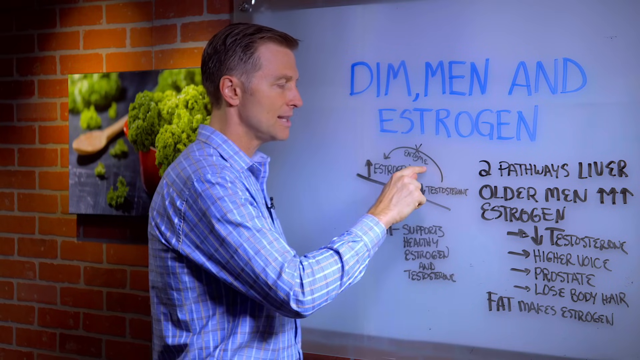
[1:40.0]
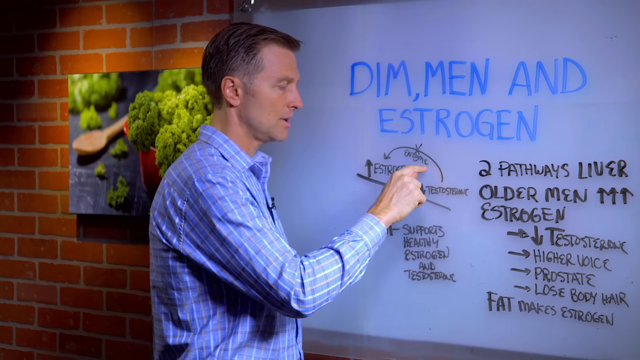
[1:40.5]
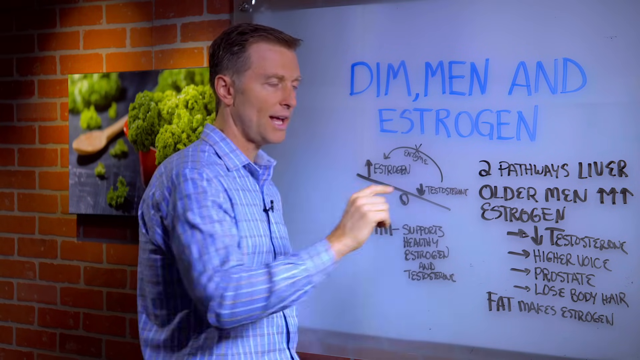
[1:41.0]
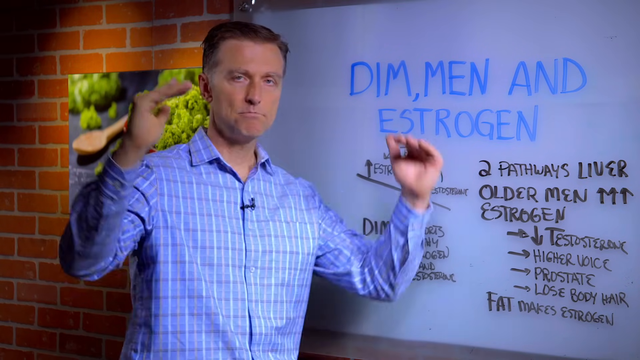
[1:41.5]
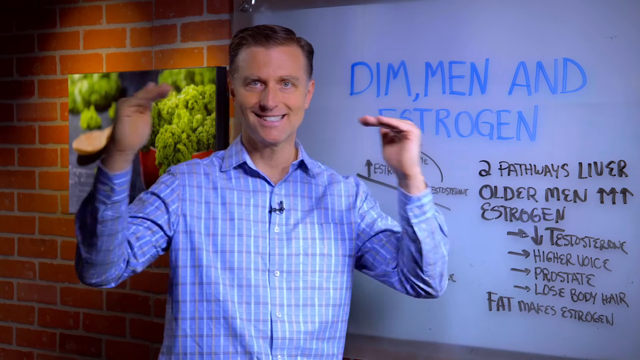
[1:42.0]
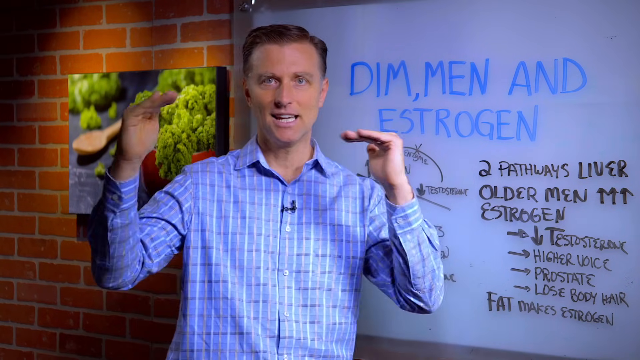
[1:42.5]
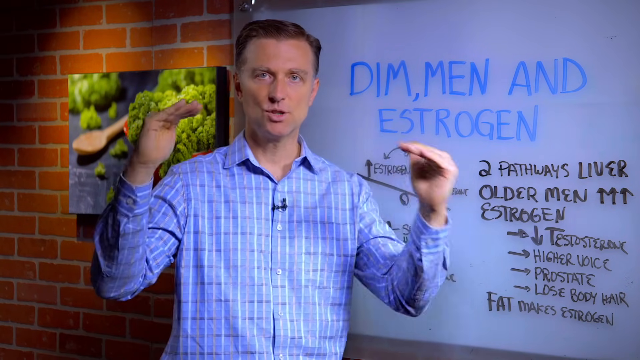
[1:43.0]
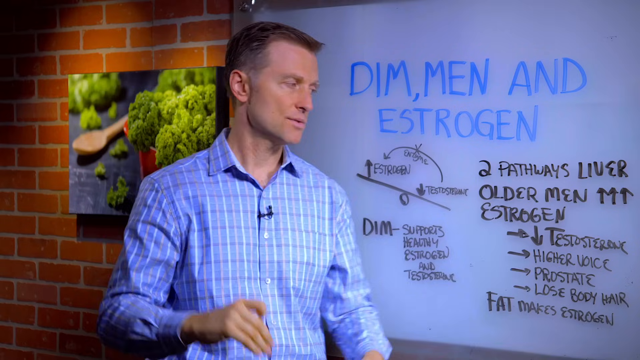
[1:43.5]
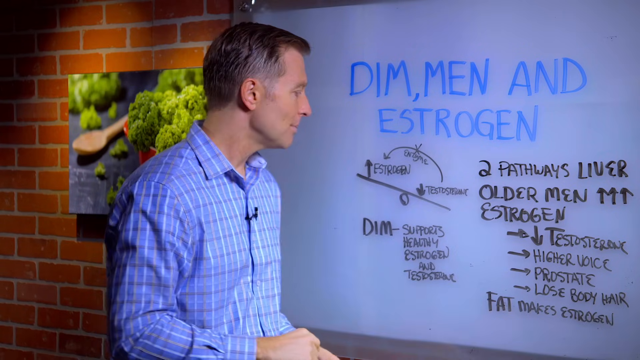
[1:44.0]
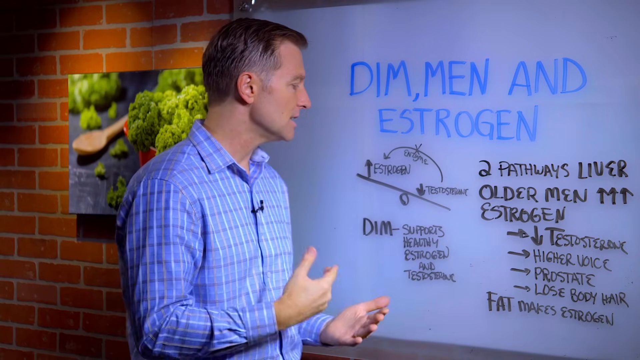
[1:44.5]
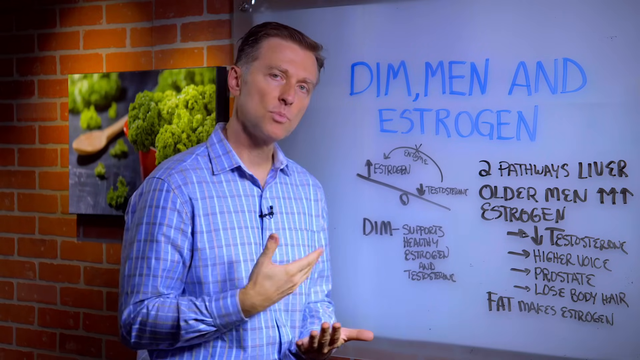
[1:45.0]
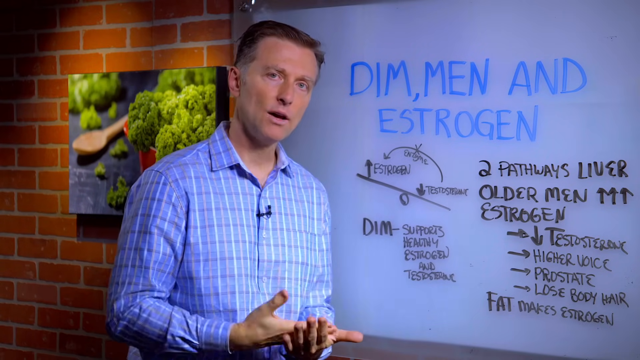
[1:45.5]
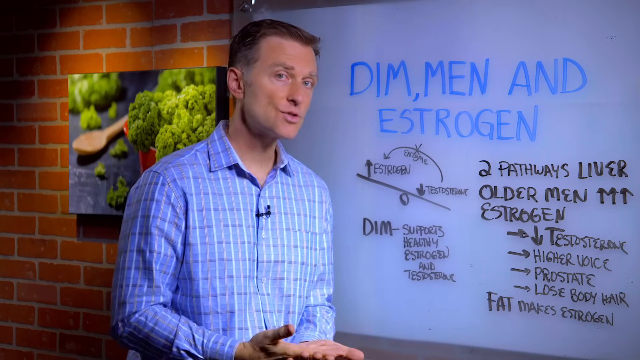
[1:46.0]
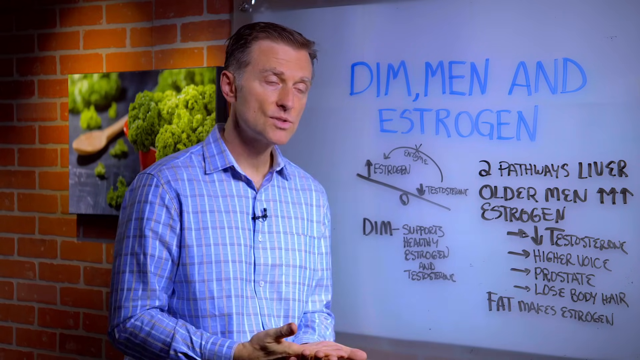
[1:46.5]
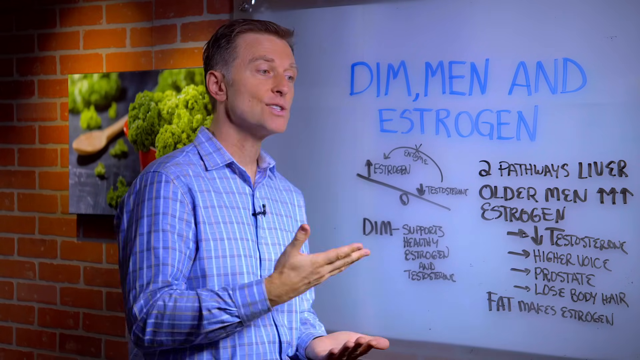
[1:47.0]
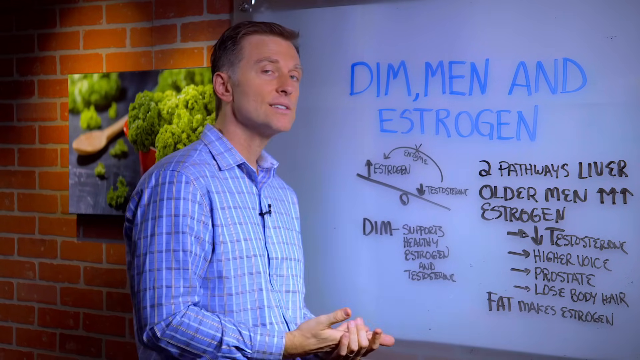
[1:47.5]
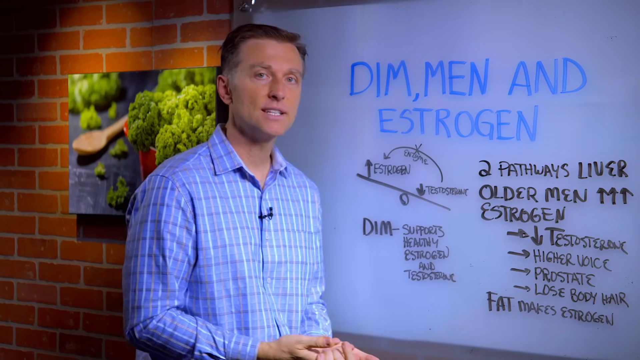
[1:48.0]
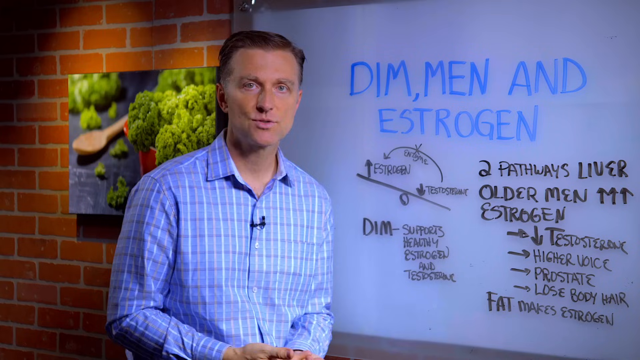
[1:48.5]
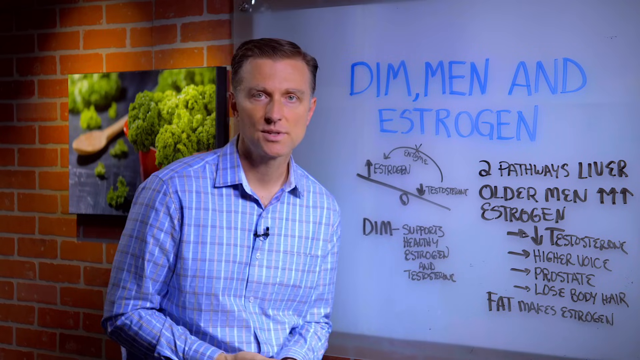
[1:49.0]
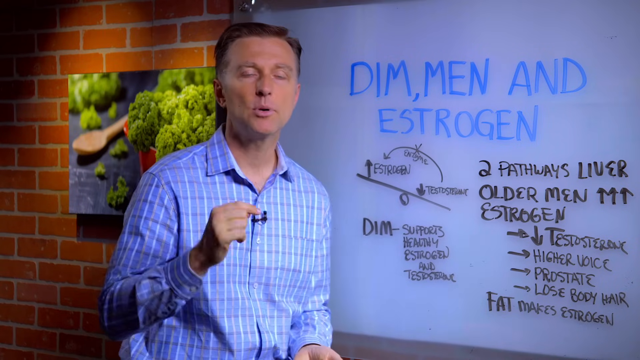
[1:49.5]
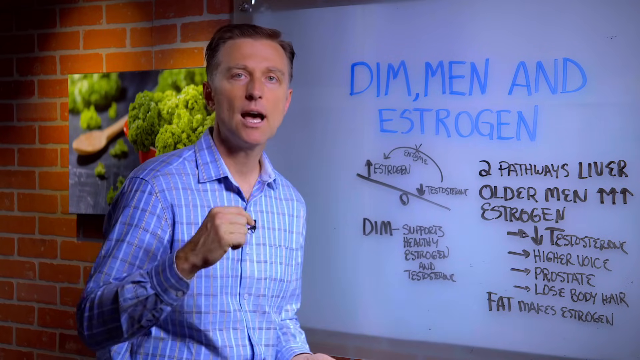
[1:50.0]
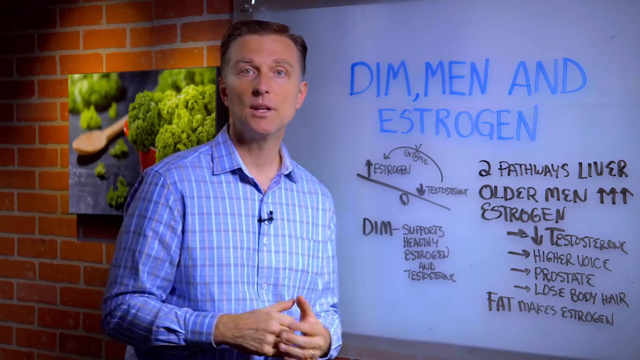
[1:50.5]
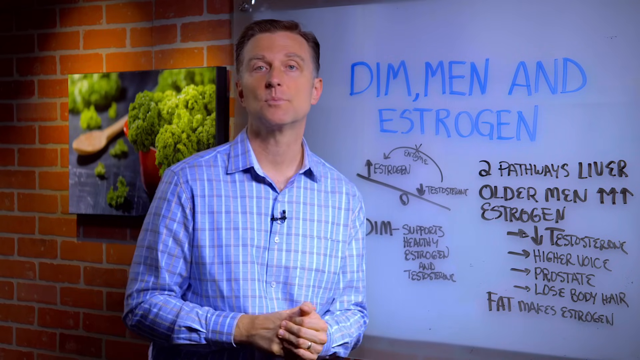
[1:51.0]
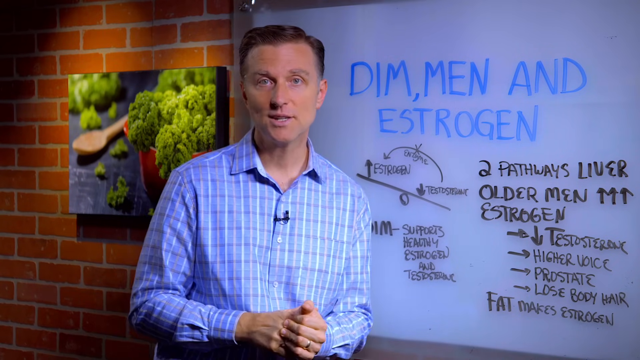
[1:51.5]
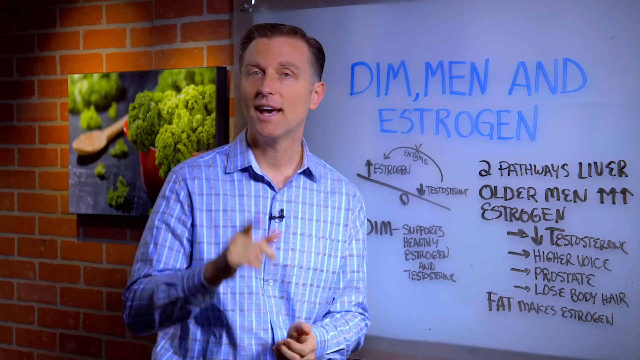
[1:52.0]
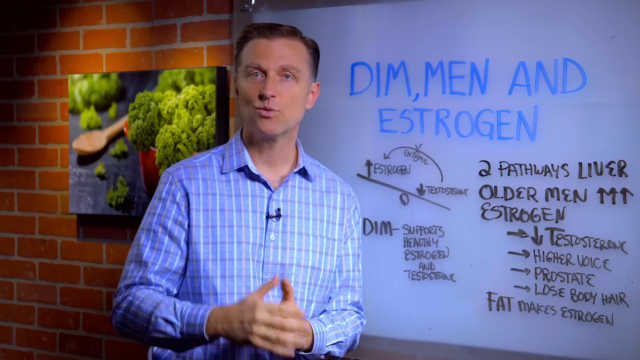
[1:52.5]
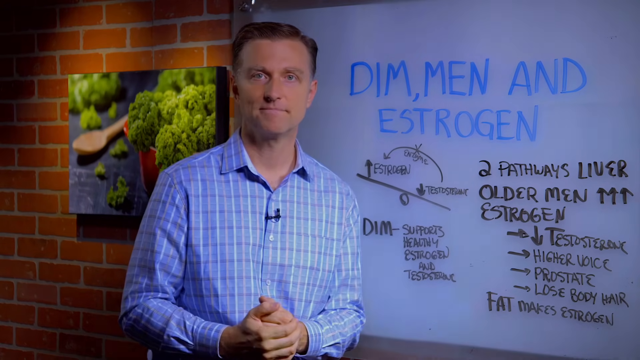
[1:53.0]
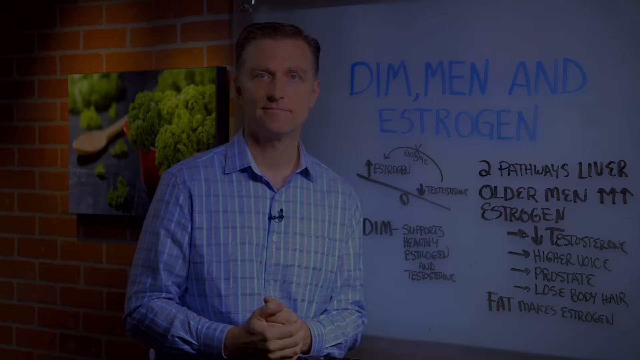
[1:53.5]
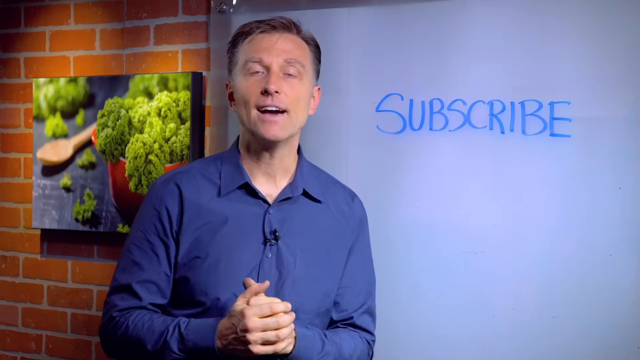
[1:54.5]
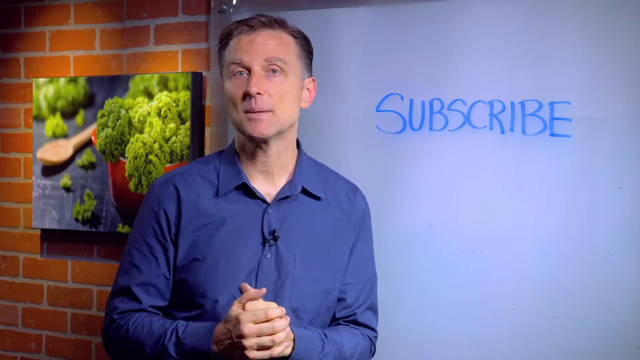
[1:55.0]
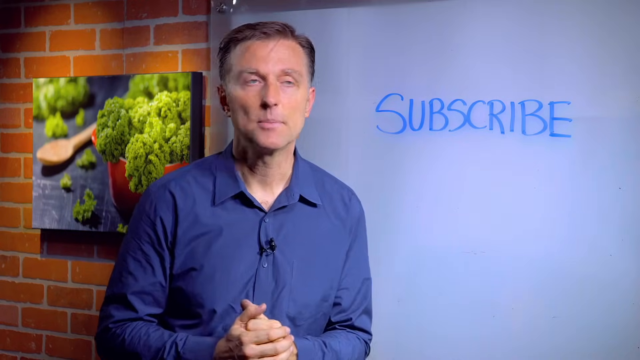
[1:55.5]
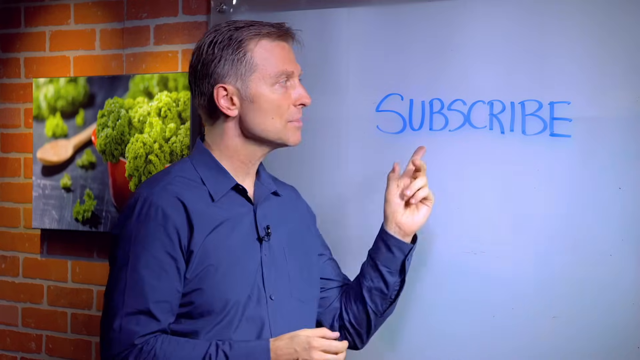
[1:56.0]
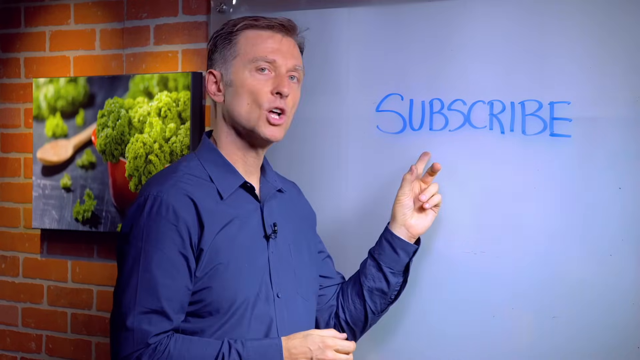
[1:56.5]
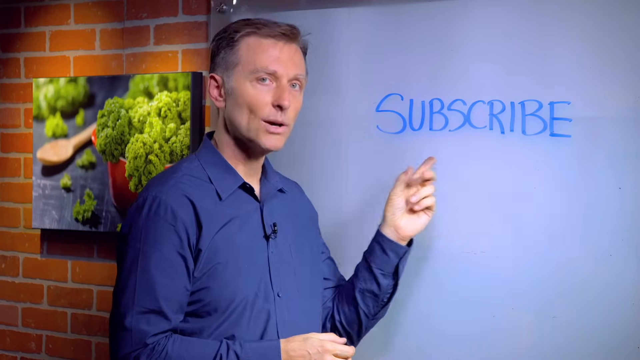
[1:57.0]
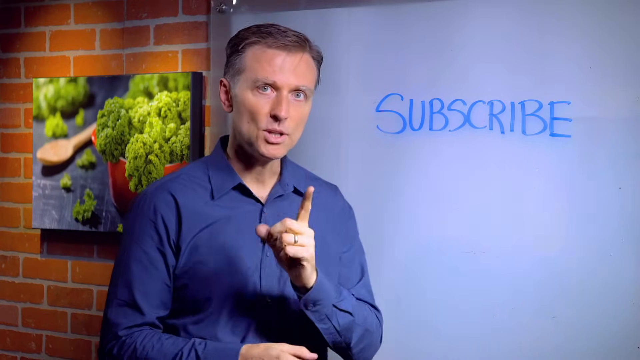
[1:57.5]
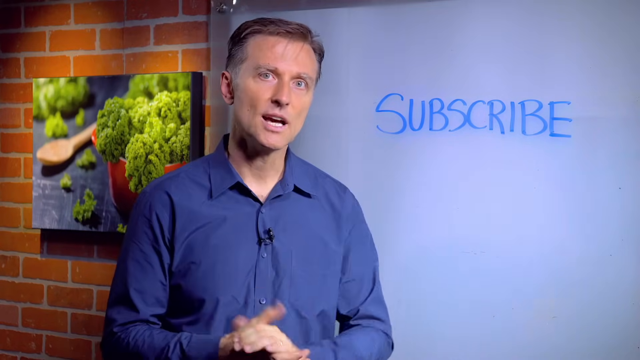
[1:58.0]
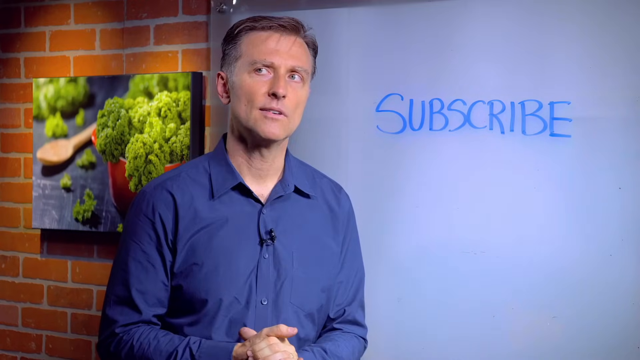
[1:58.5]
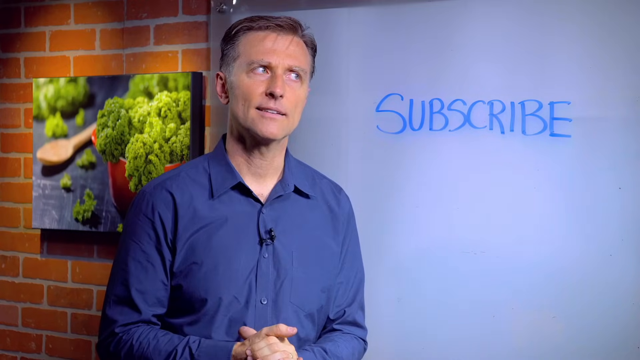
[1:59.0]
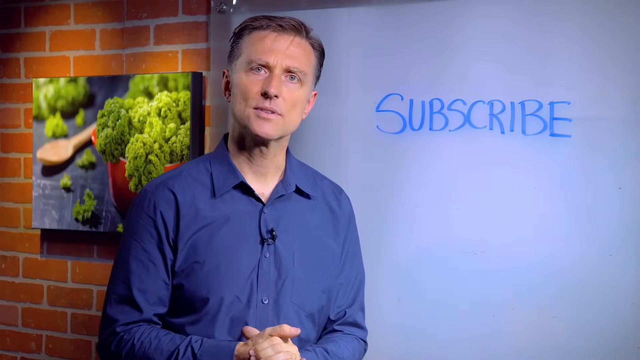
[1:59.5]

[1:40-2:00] A man in a blue plaited shirt, with a small black microphone clipped to his shirt, looks both at the camera and at a whiteboard beside him and appears to be discussing something on it. He moves his arms up and down and shifts them around. The whiteboard behind him says "Dim, Men and Estrogen" in blue at the top, with additional information written below in black. On the other side is a brick wall with a picture of something green and bushy and a wooden spoon. The man looks back and forth between the camera and the whiteboard, moving his hands as he expresses himself. The video then shows the same man wearing an all dark blue shirt with a small microphone, pointing to a whiteboard that says "Subscribe."